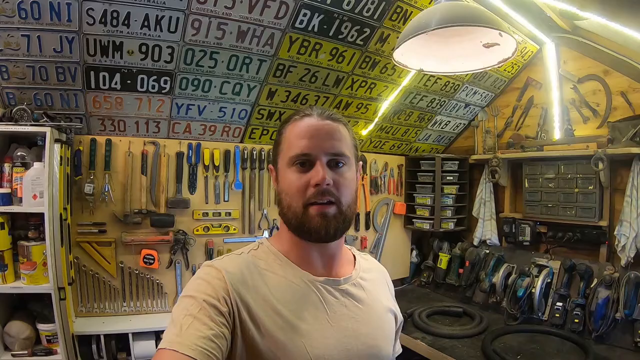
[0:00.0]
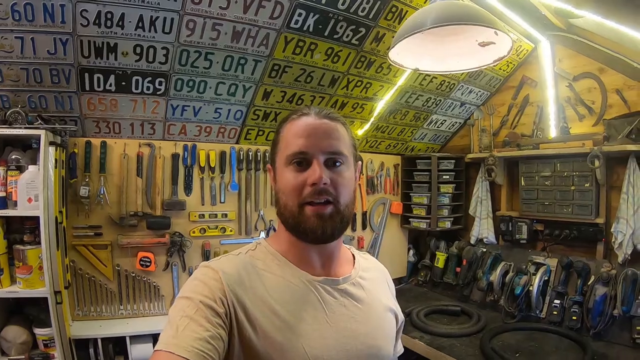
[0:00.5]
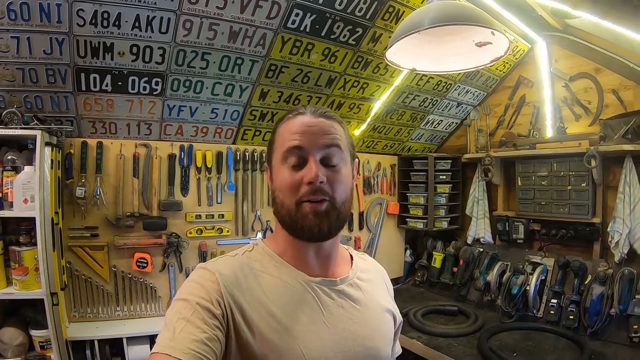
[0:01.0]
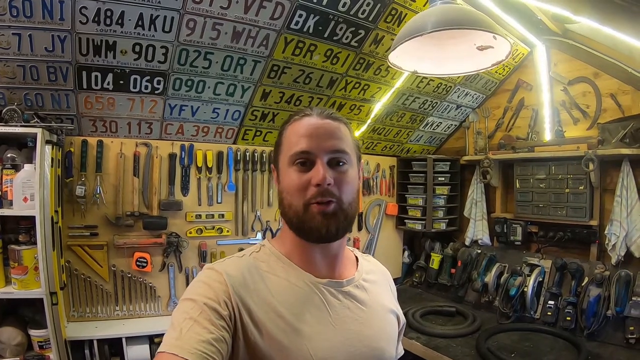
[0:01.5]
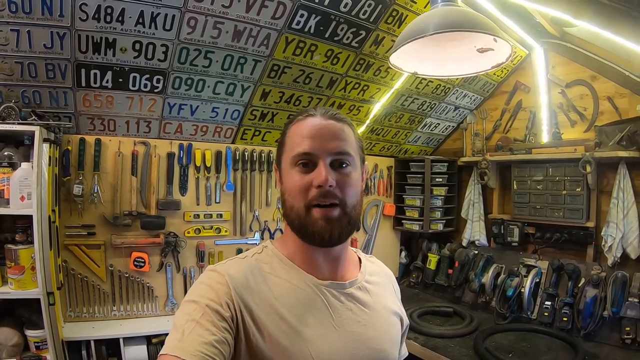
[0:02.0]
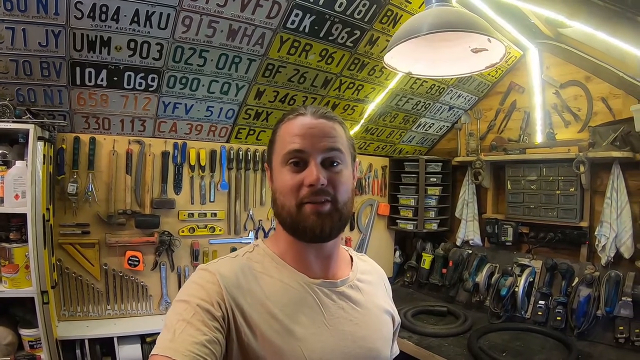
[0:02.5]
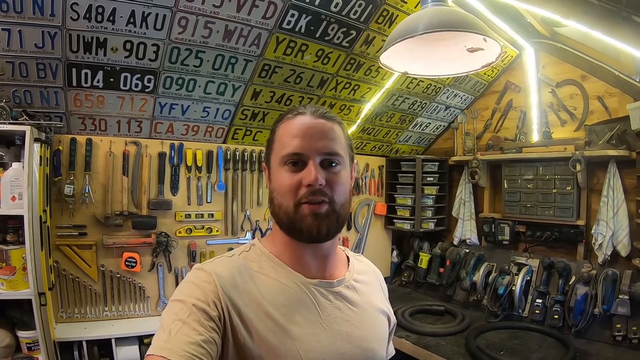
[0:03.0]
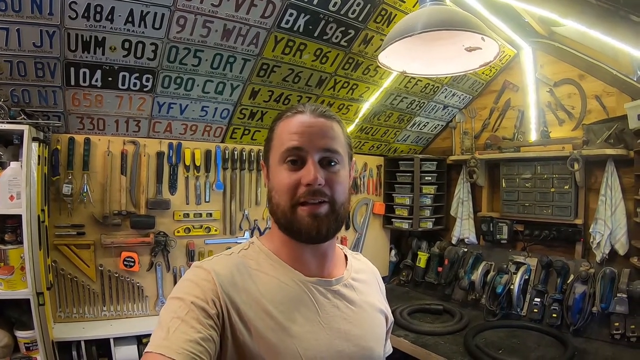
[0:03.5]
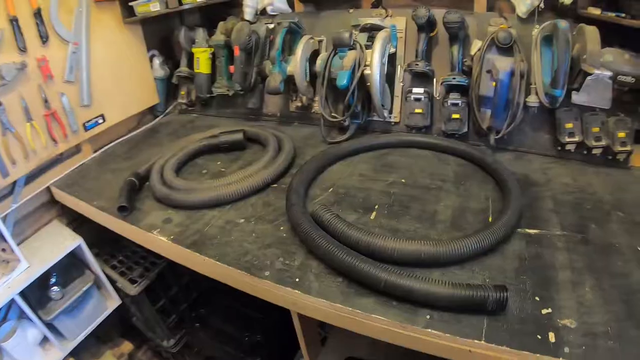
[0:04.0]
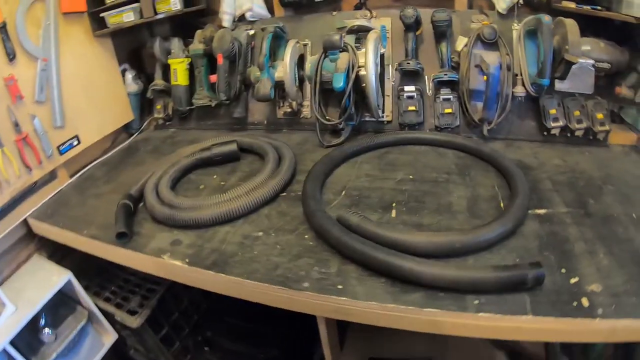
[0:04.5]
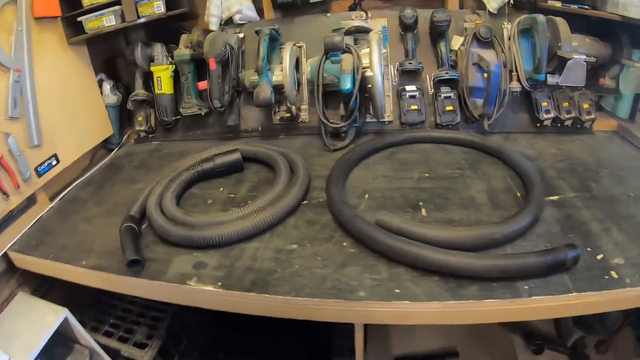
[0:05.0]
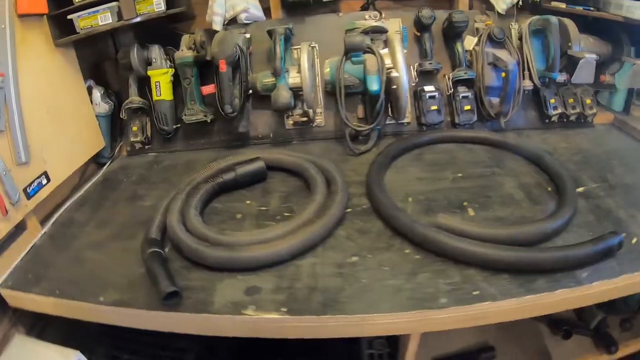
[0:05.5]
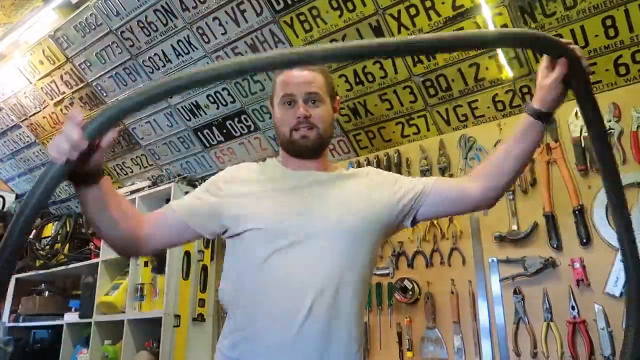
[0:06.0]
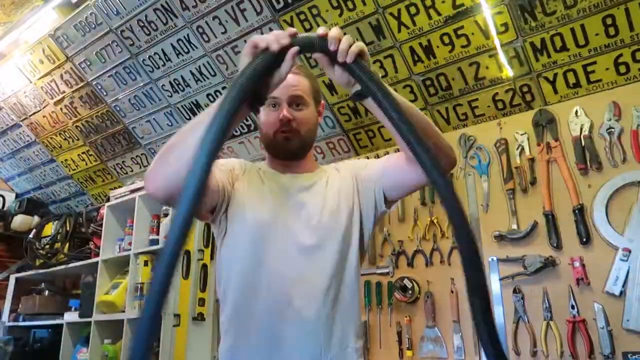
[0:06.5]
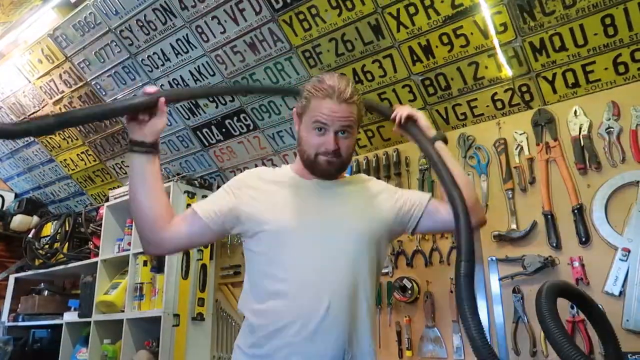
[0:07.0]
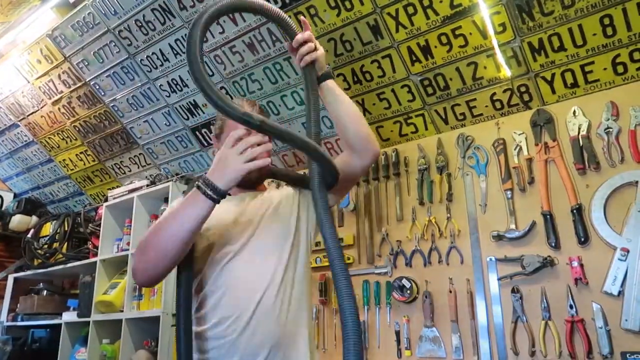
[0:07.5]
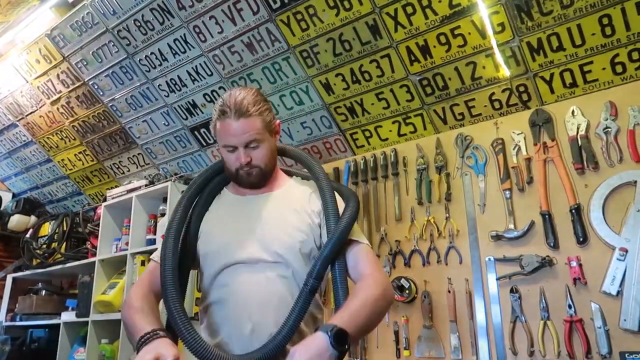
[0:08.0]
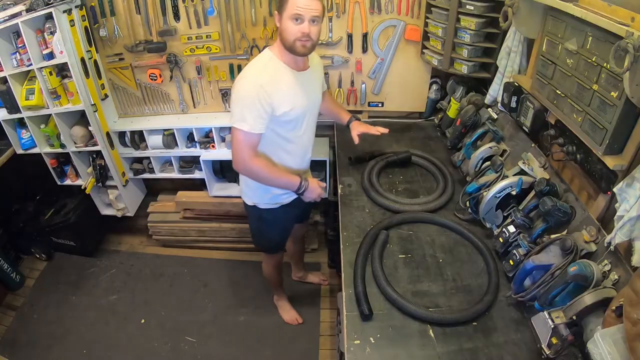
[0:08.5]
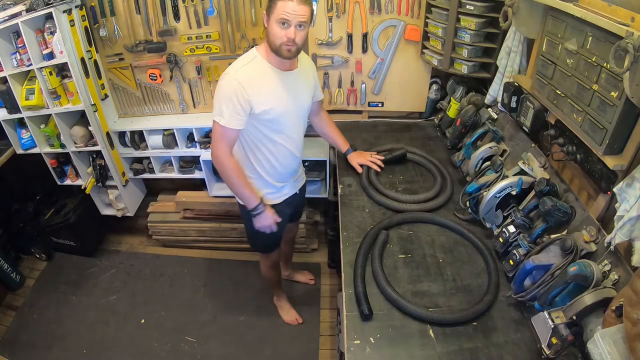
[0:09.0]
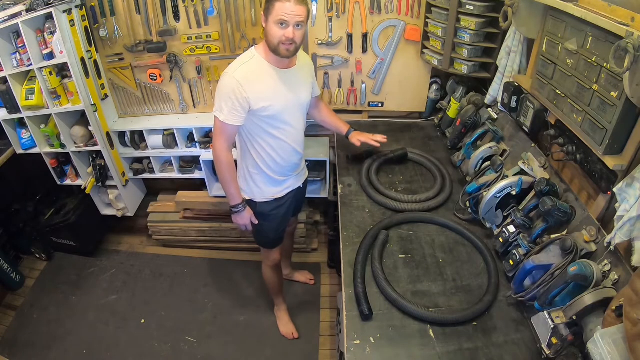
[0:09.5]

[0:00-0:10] Inside a workshop, a man who is maybe in his 20s, white, with a man bun and a beard, speaks directly in front of the camera. Behind him, tools hang on the wall: wrenches, a bunch of rulers, different types of mallets and hammers, and scissors or shears, with many other things against the wall. A bunch of license plates wrap around the ceiling; some are yellow and some are white. The view zooms in on a workbench holding two coiled hoses. He puts a hose over his neck and tries to extend it in sped-up footage. The next scene shows him working on the two hoses on the workbench, which lie side by side, coiled. He touches one of them.